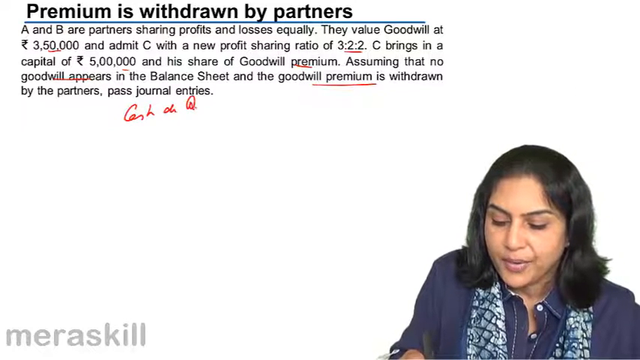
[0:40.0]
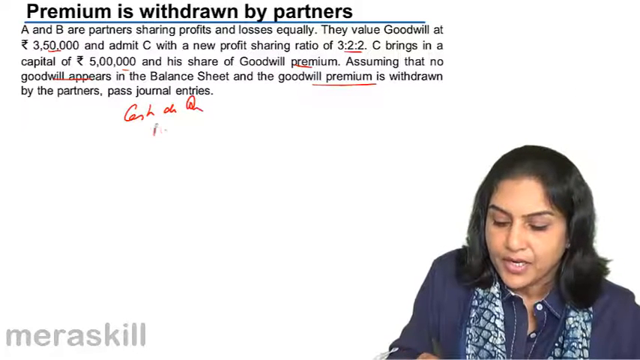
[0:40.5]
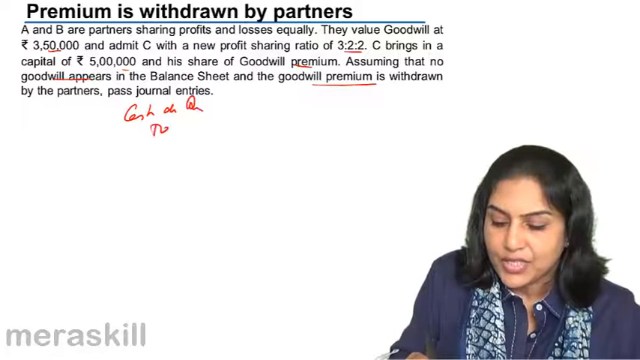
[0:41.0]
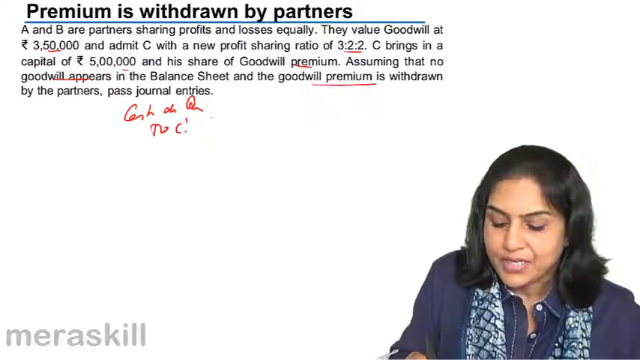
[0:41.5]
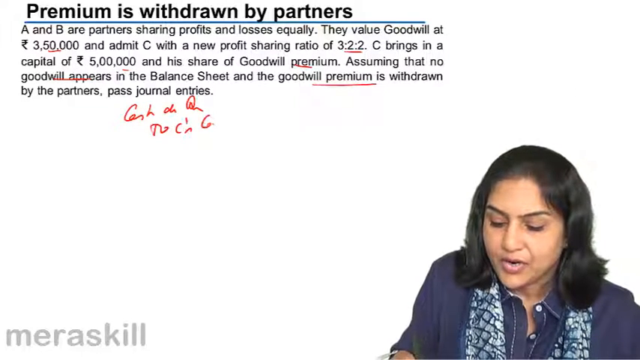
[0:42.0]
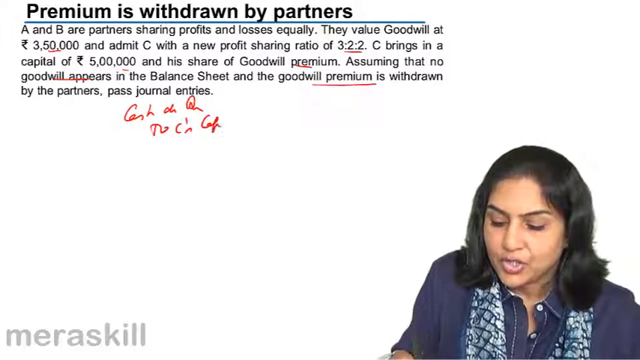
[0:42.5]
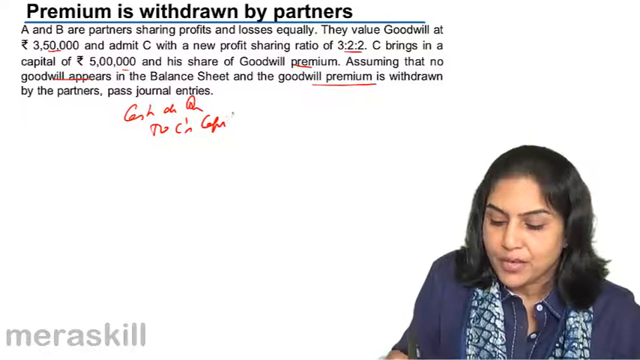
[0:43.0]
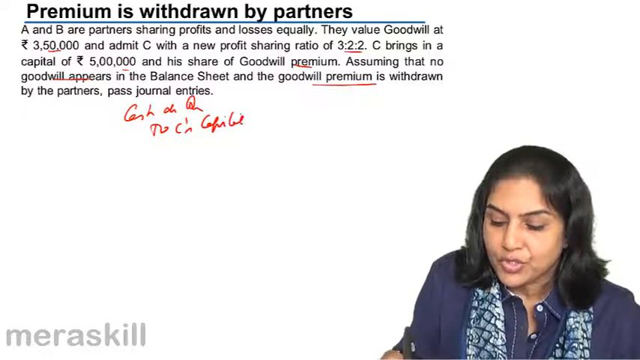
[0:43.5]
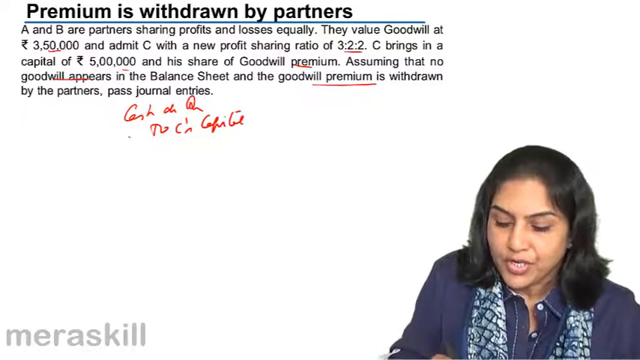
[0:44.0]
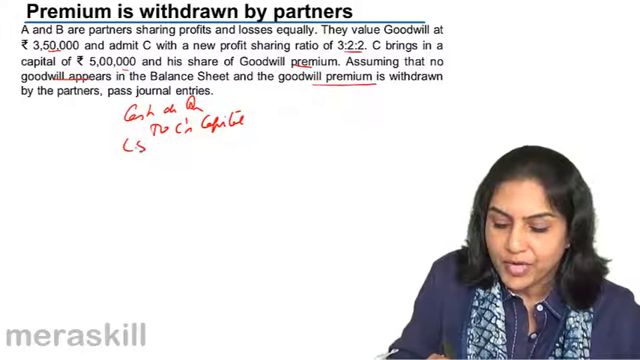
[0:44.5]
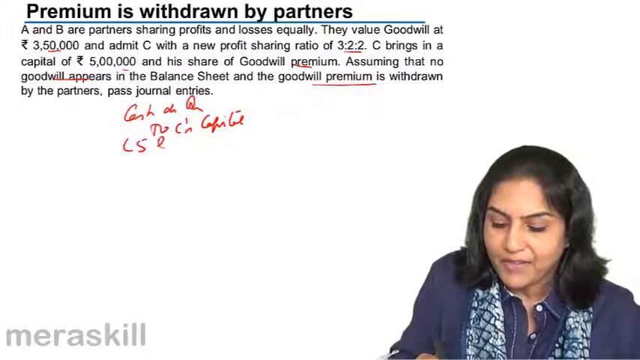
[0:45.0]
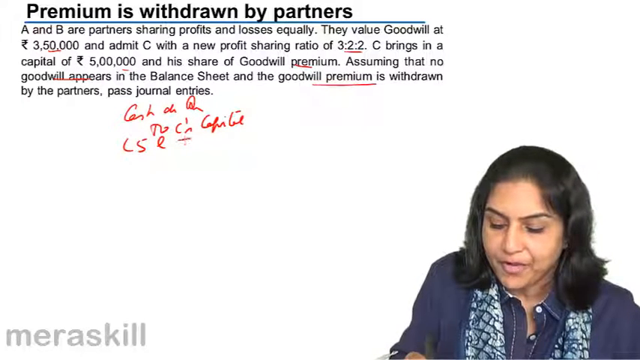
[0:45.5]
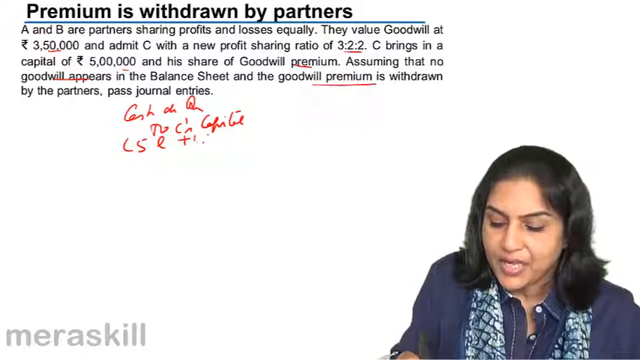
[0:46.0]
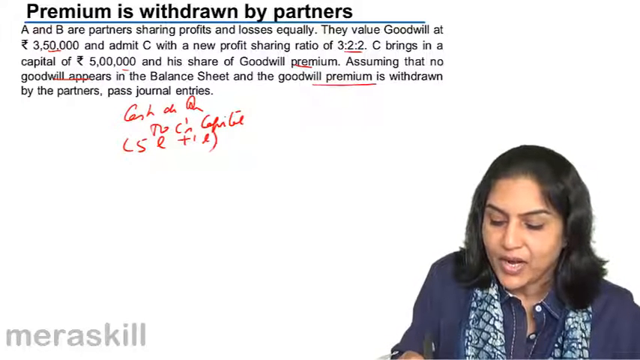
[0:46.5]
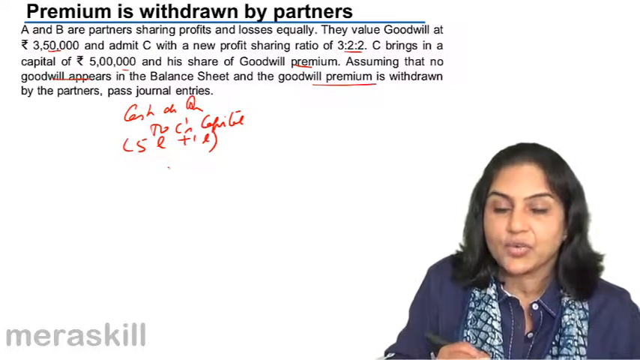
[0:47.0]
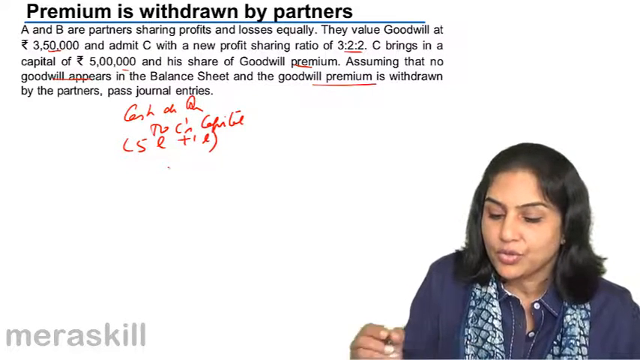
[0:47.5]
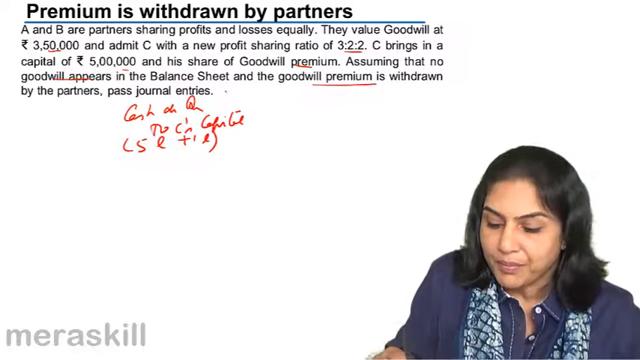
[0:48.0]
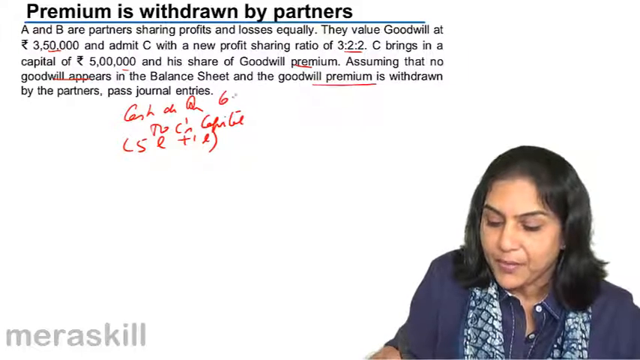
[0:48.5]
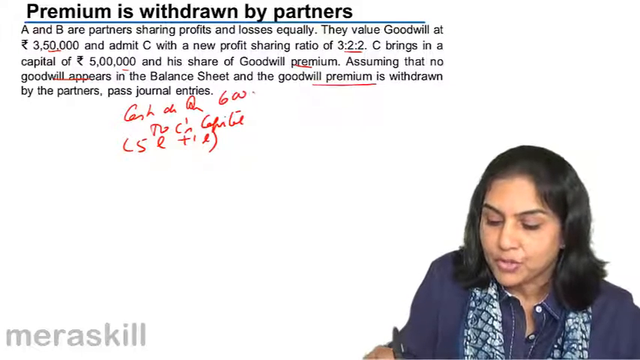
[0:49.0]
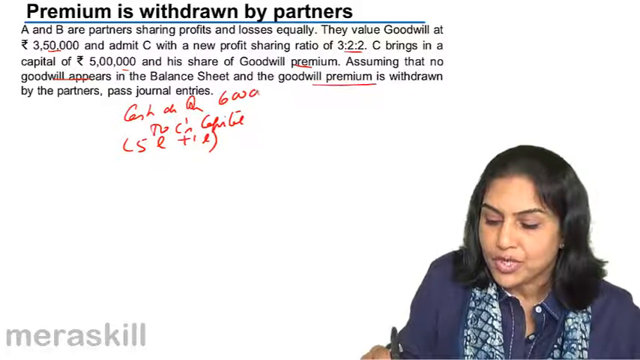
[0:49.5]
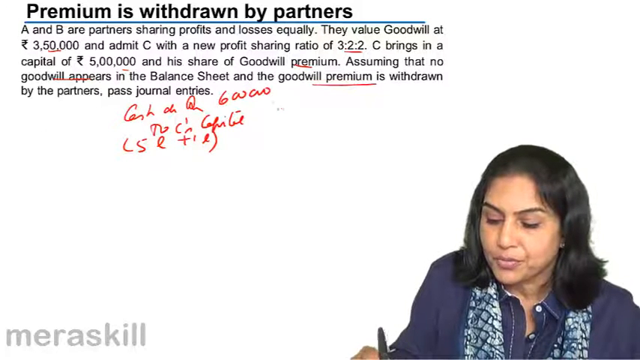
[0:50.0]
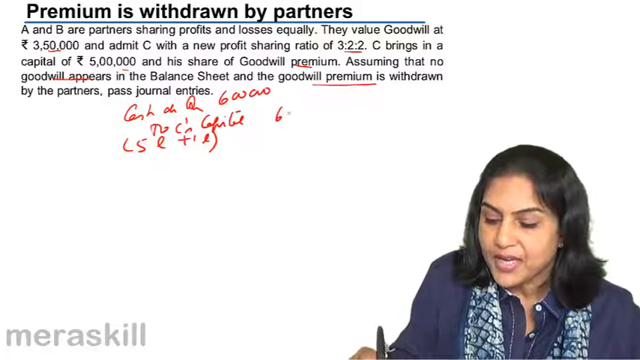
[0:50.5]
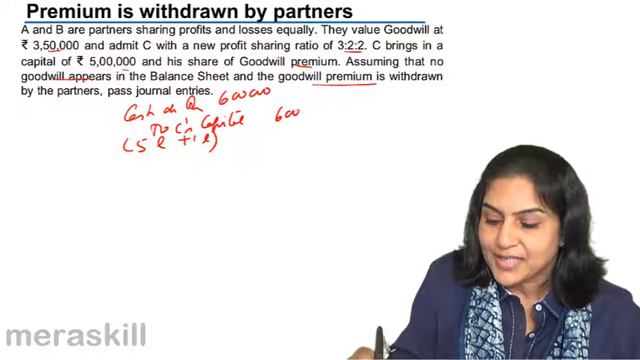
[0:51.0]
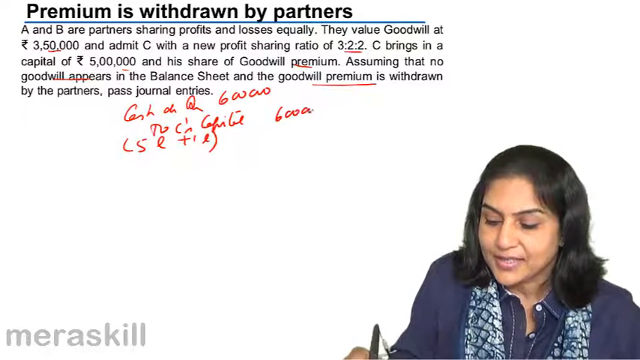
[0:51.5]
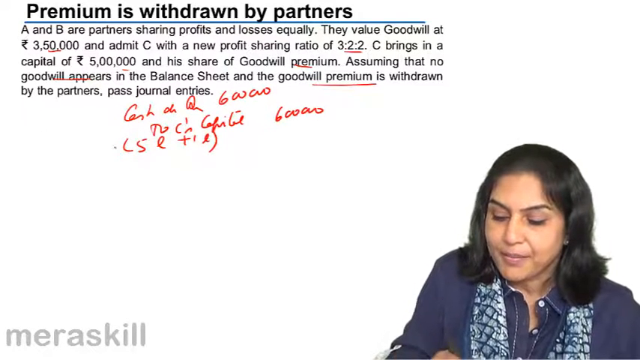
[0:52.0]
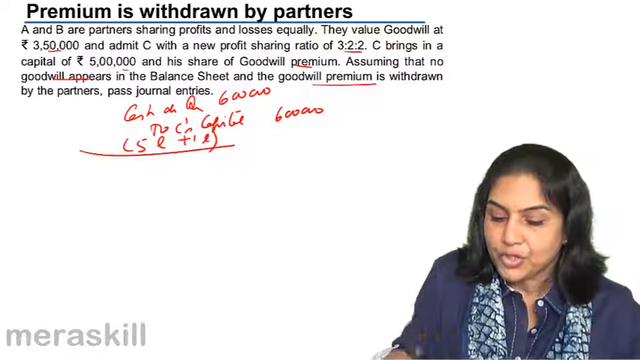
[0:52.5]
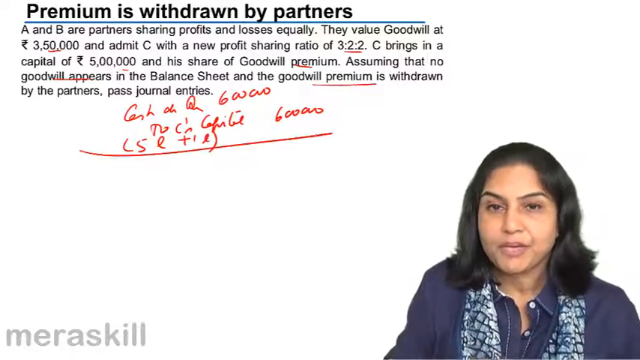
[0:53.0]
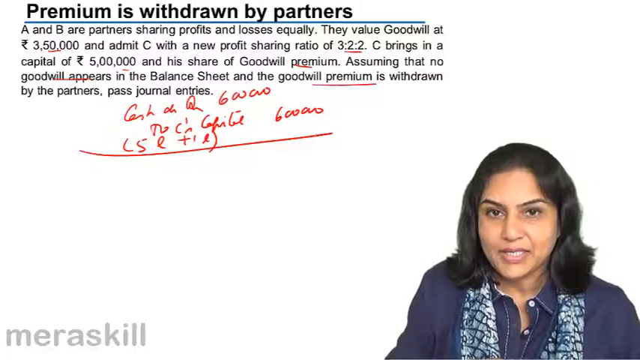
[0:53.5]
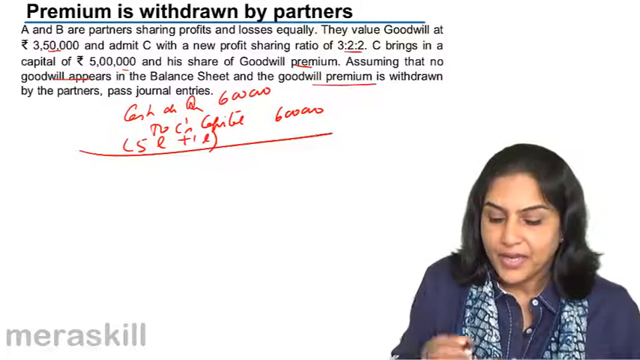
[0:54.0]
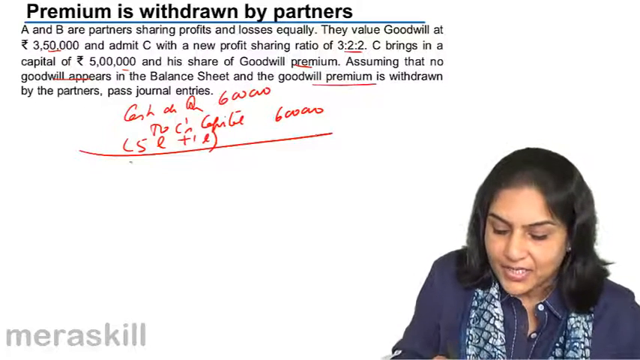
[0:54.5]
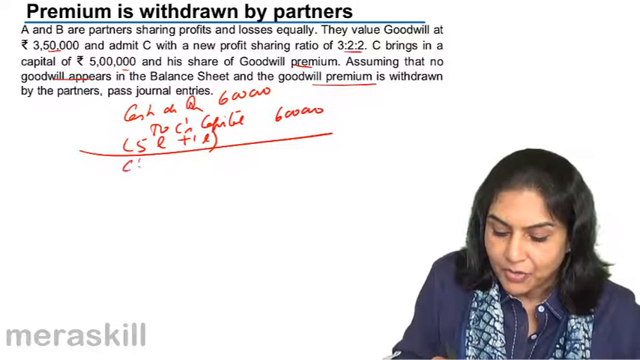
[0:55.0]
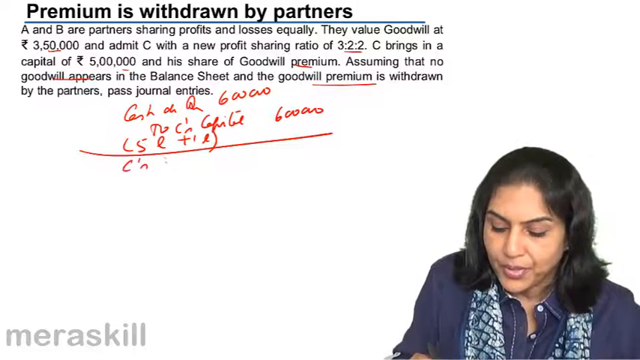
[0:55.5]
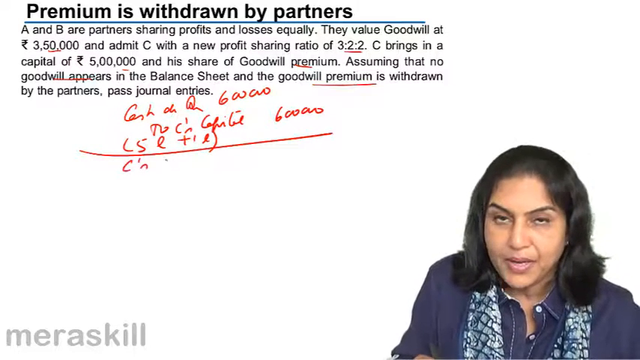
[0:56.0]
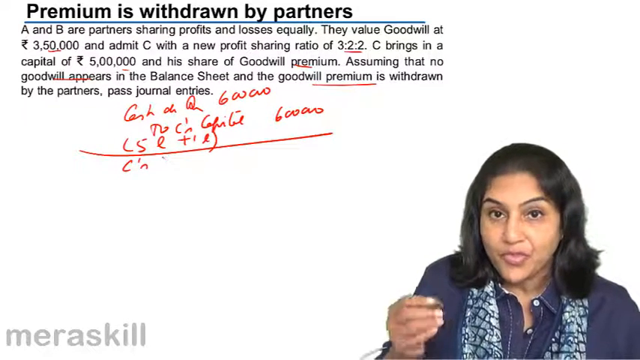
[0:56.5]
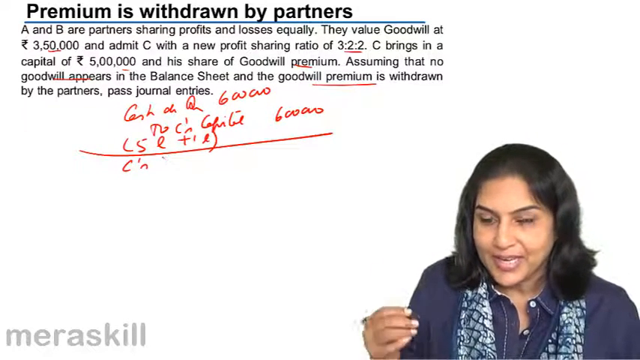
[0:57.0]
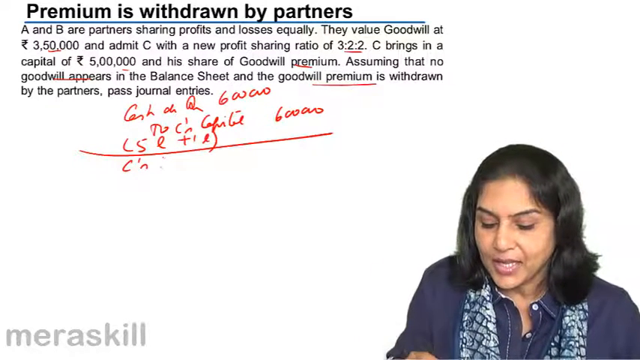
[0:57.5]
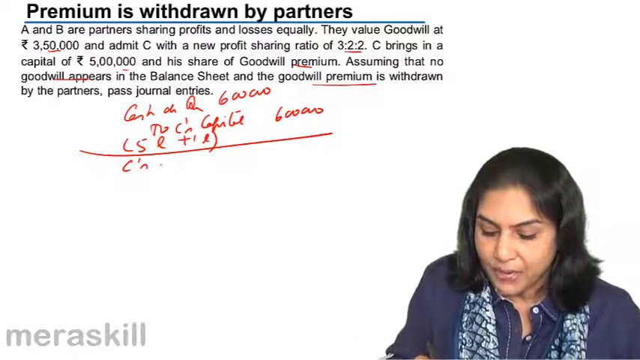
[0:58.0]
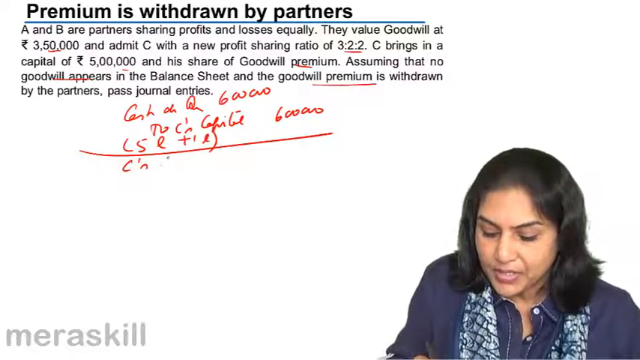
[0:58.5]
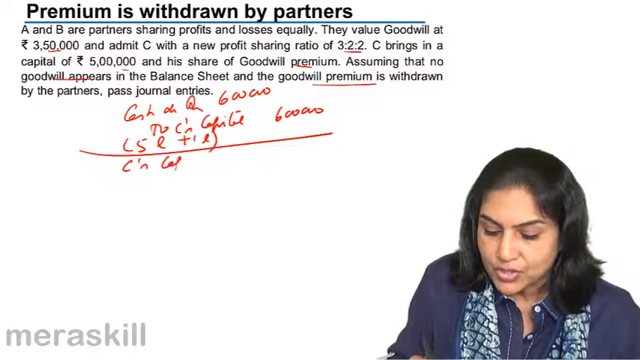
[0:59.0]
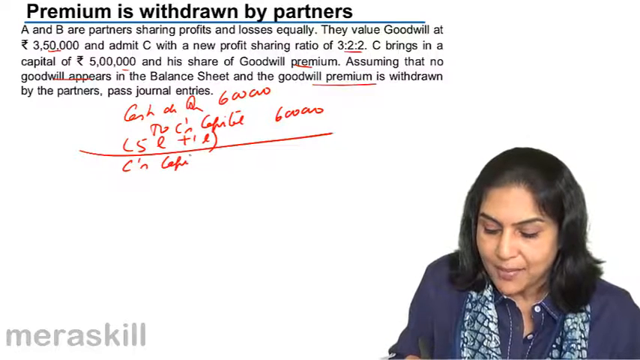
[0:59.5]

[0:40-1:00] The woman is speaking, and the premium is withdrawn section is still on the screen. The markings she has been making appear on the screen under the text: the number 50 is underlined, as is a ratio of 3 by 2 by 2, the word "premium" is marked twice, and the word "will" is marked as well. She has also written a note underneath the text column. All of the underlining and the handwritten text are in red. She continues to look down as she writes, and the writing appears on the screen as she writes it. Once she is done, she pauses briefly and looks up at the camera.